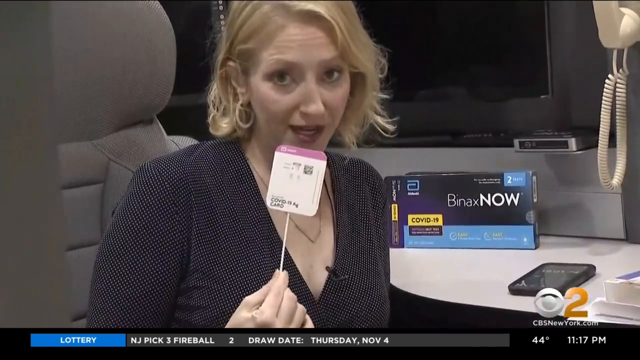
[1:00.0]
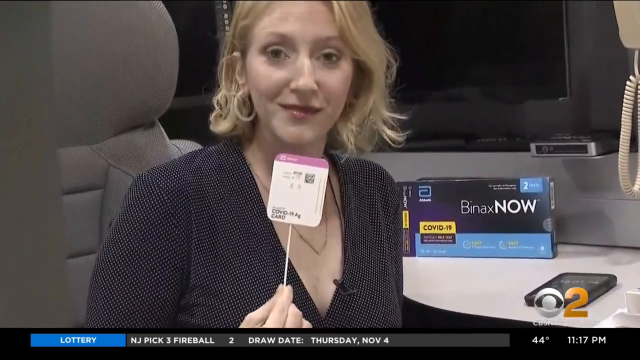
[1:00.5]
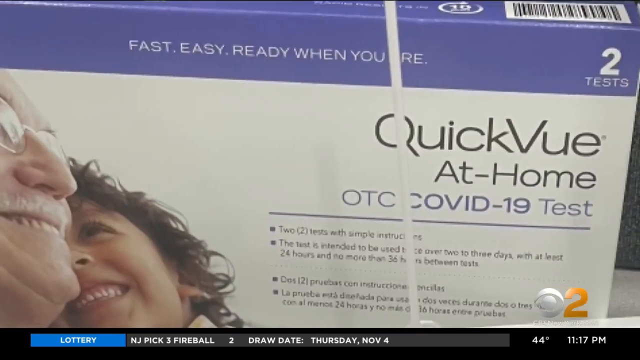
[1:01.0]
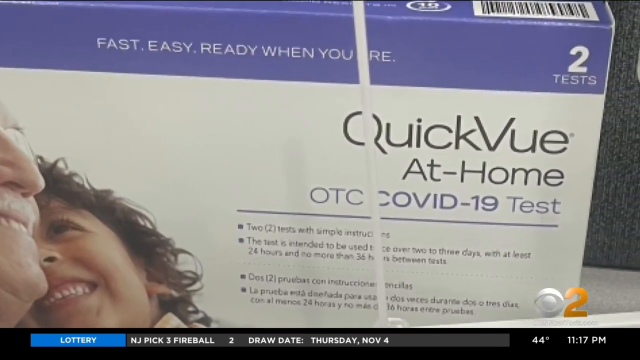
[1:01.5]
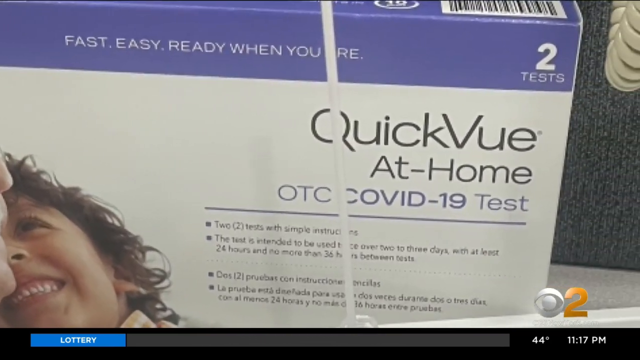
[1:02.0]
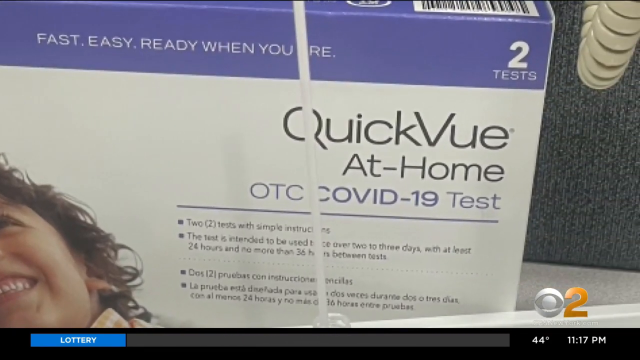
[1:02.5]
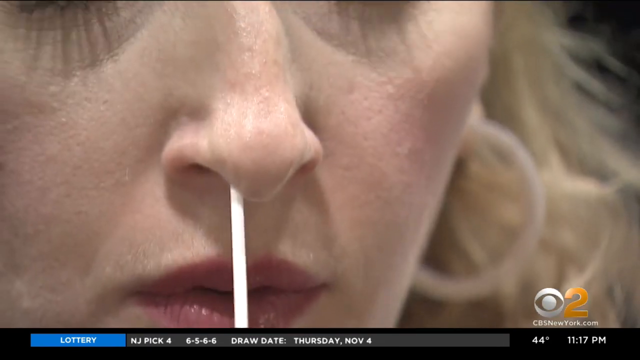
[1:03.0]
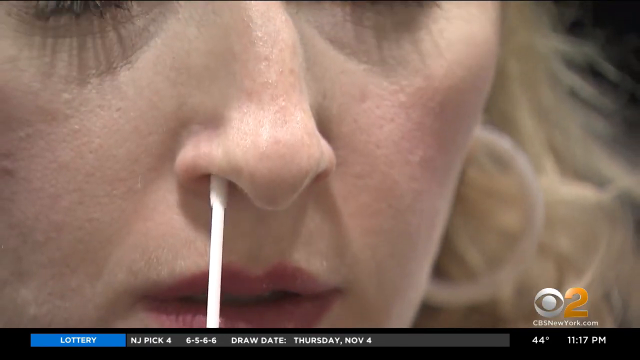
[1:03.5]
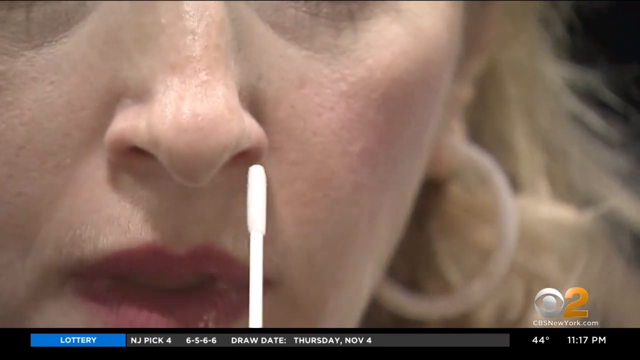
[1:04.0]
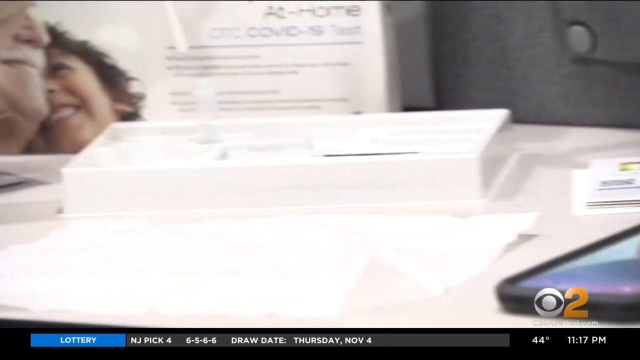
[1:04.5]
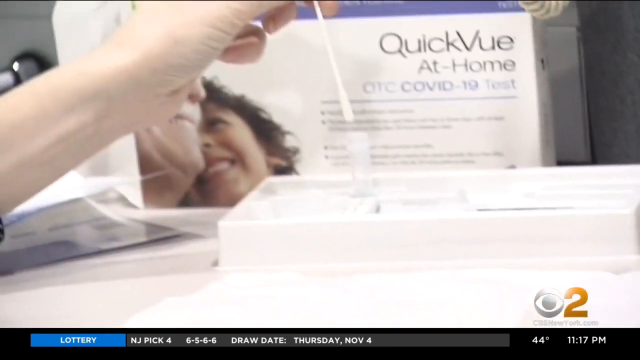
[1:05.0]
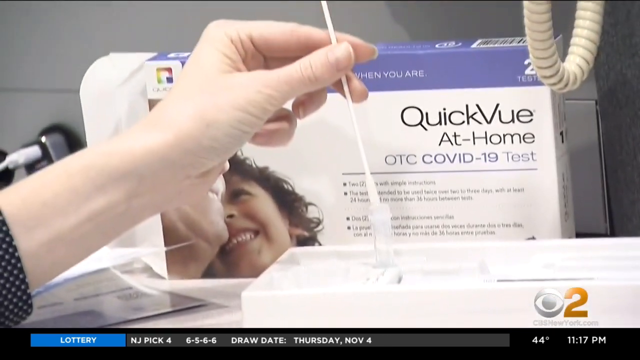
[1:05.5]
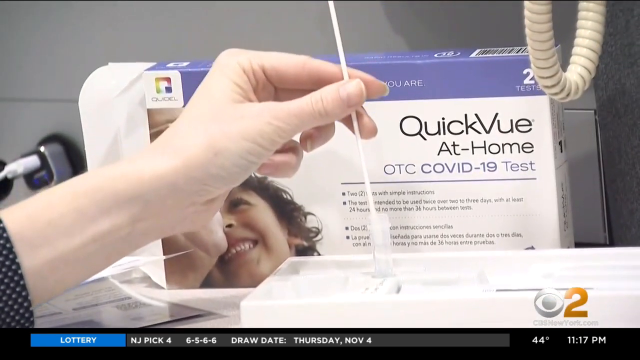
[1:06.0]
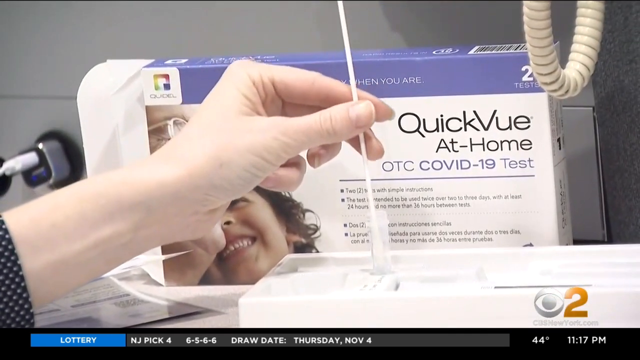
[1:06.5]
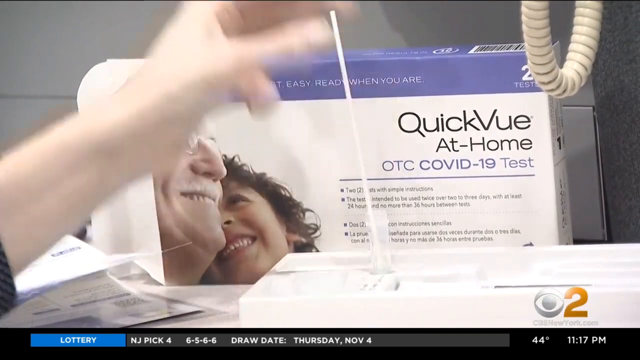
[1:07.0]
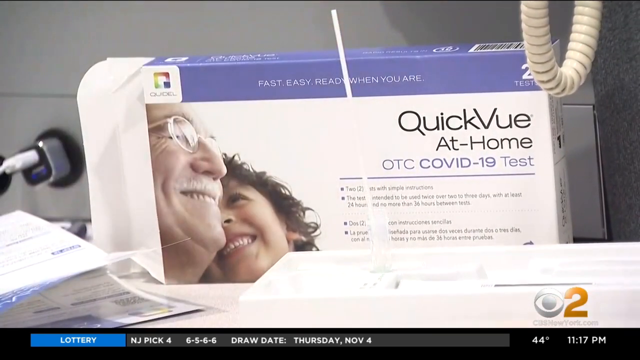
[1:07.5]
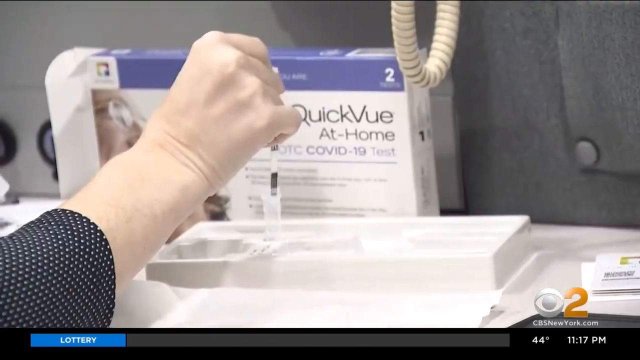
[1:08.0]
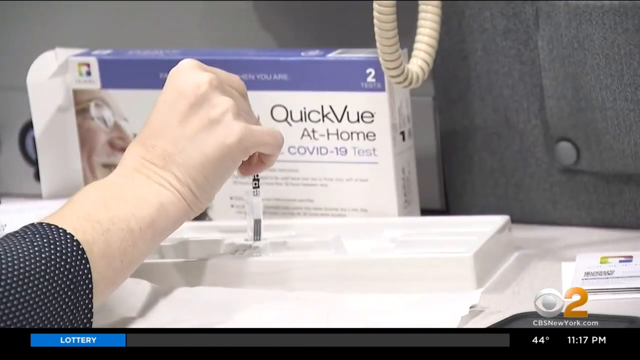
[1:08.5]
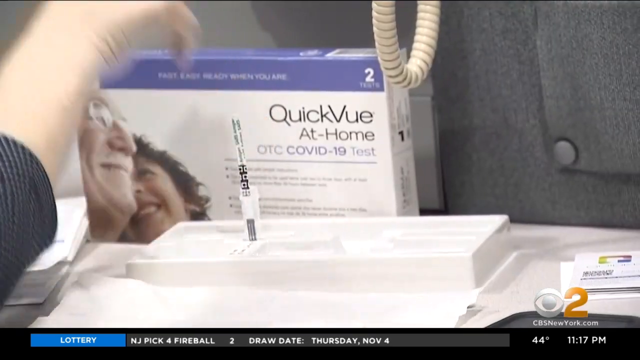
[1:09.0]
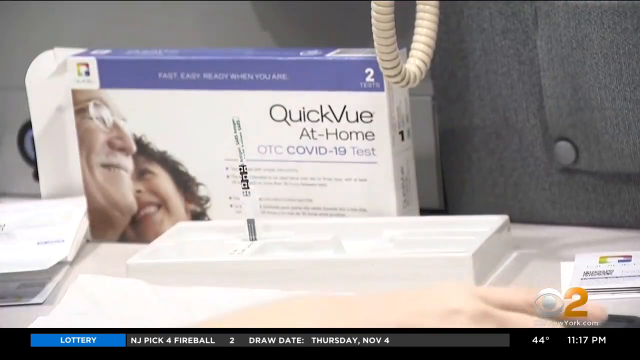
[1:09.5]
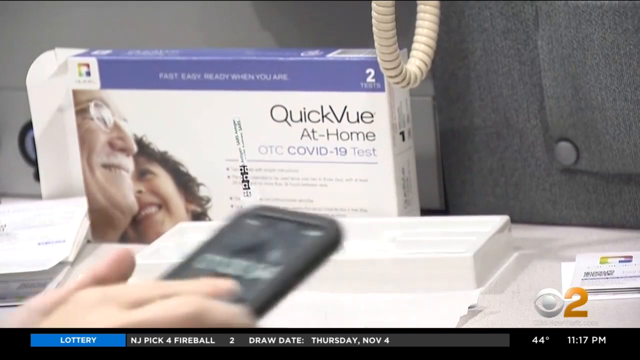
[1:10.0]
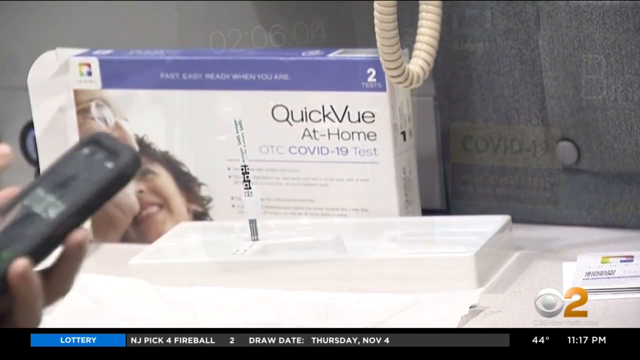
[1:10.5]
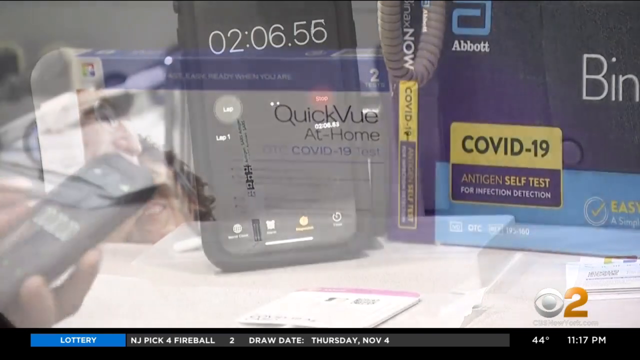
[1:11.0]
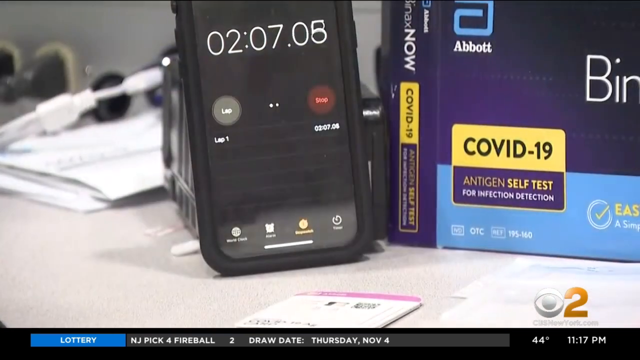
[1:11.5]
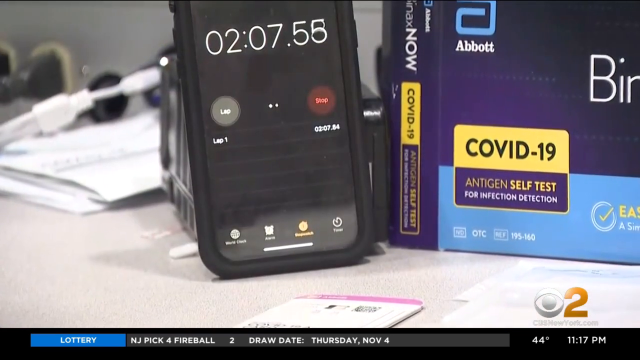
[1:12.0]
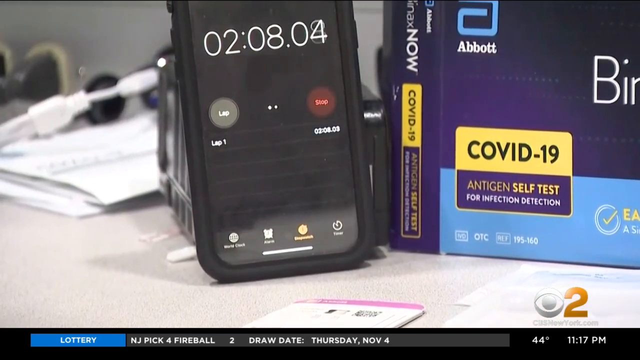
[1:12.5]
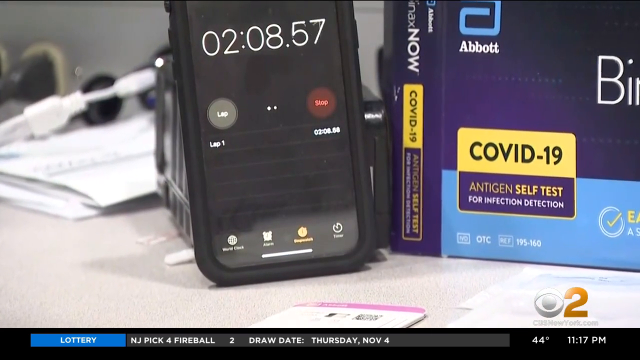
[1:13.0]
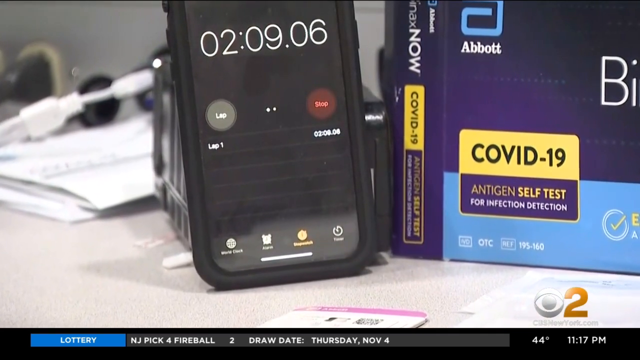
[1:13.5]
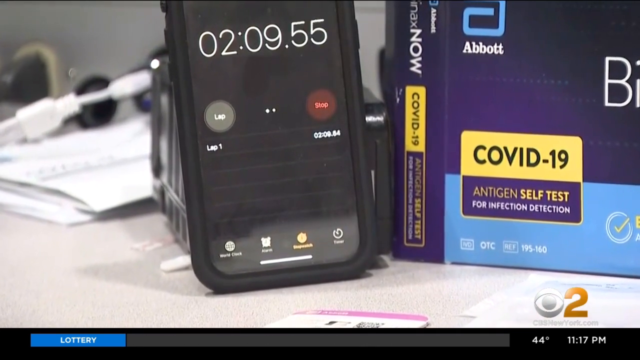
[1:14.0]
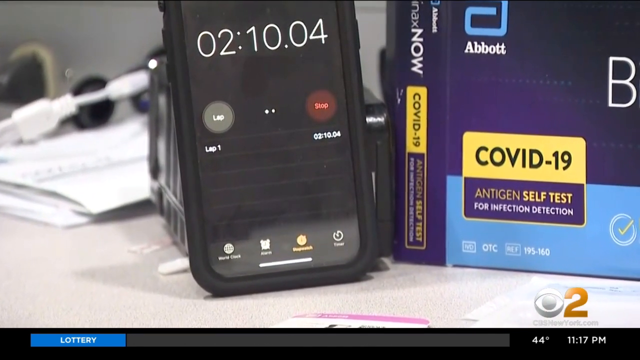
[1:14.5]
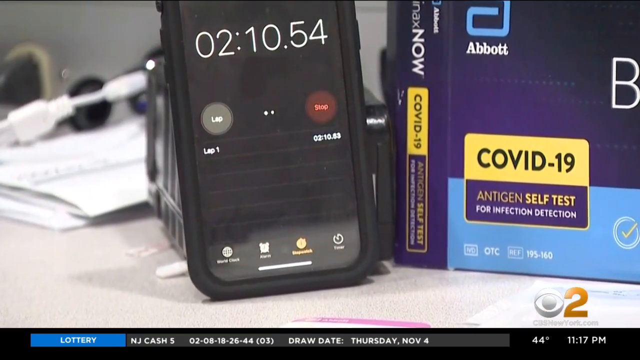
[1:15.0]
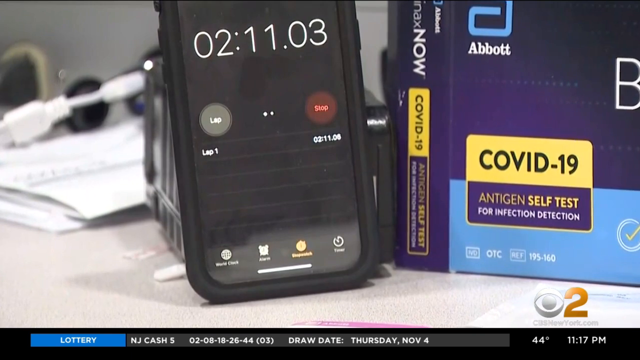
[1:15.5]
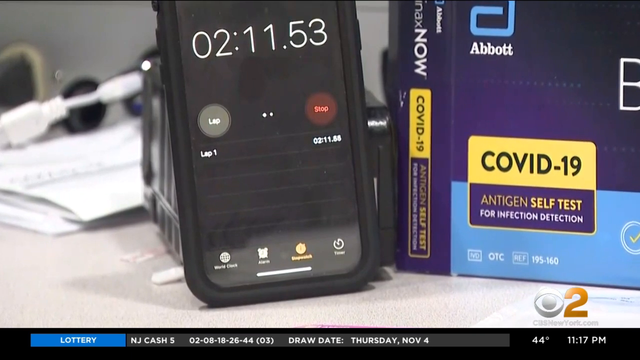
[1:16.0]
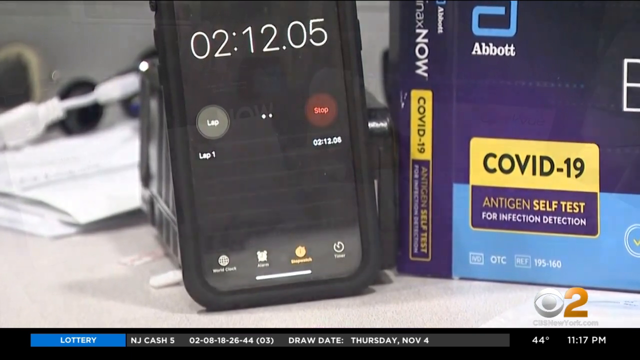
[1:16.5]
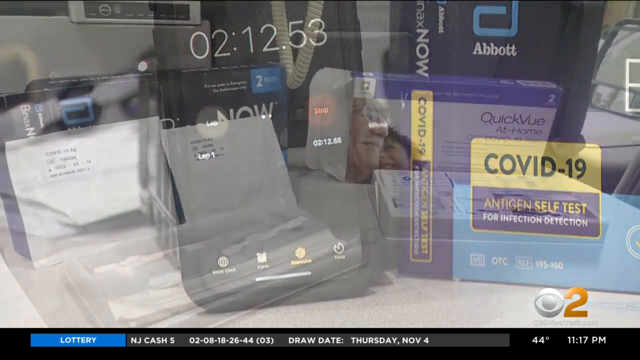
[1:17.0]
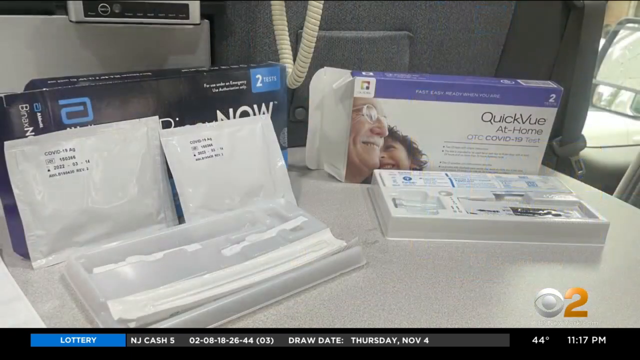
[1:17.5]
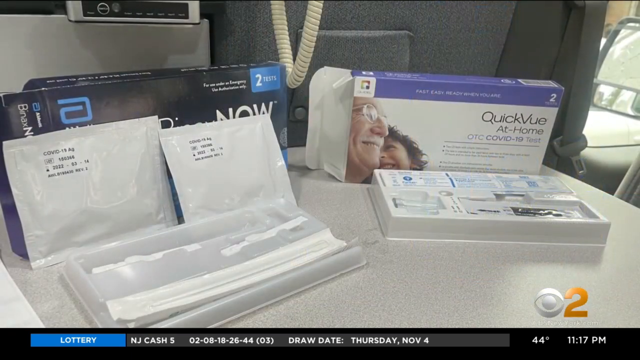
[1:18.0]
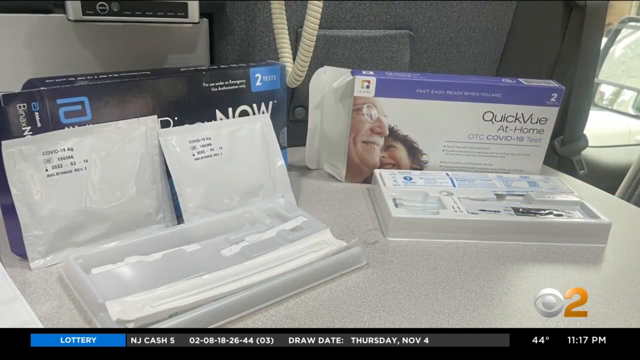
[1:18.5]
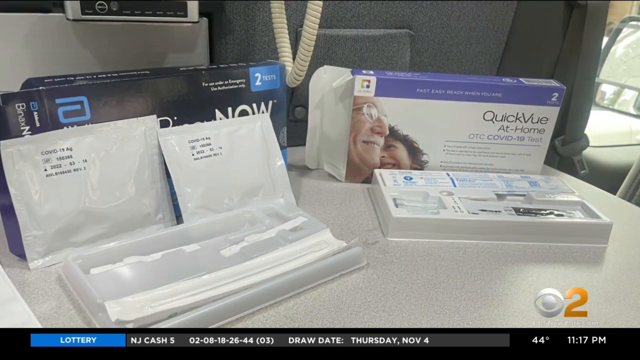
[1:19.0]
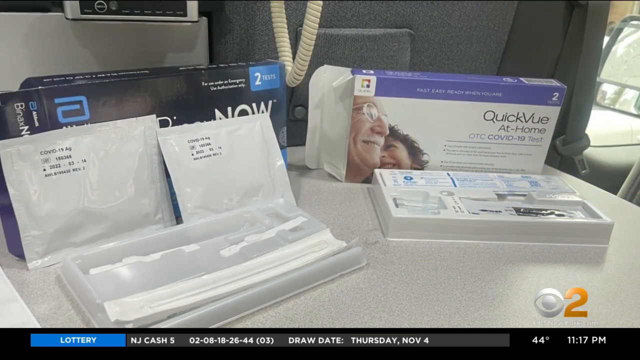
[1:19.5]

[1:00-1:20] The woman continues showing viewers how to use the at-home COVID test. She shows how to swab both sides of the nose, then puts the swab into the carrying case that comes with the test. She sets a timer on her phone, which is sitting up against an item in the back, with the COVID test box to its right. The phone screen shows buttons labeled "lap" and "stop," and along the bottom it reads "world clock," "alarm," "stopwatch," and "timer," as the time runs. The video then shows the two different at-home tests side by side, both opened, with the boxes propped up and the materials from inside the boxes in front of them.